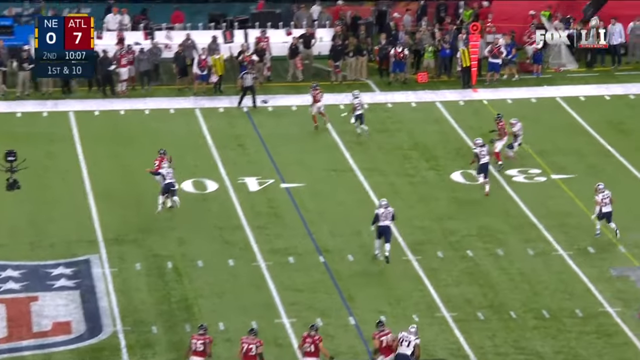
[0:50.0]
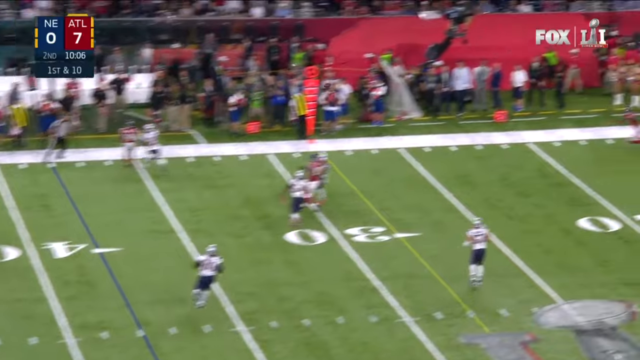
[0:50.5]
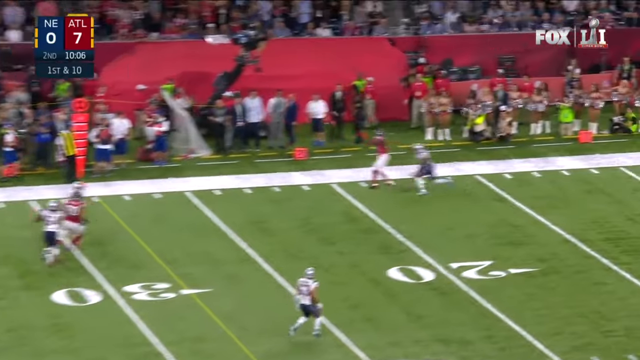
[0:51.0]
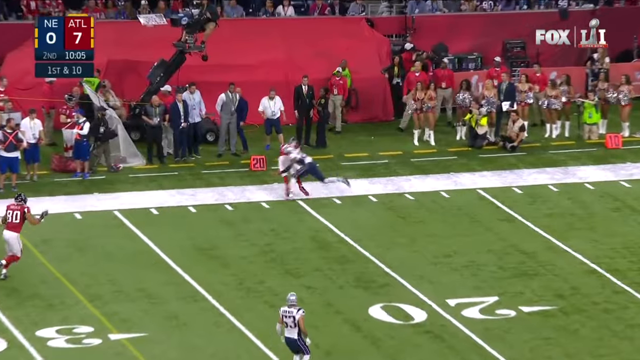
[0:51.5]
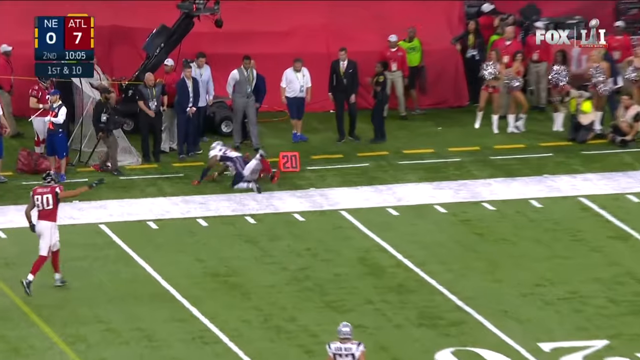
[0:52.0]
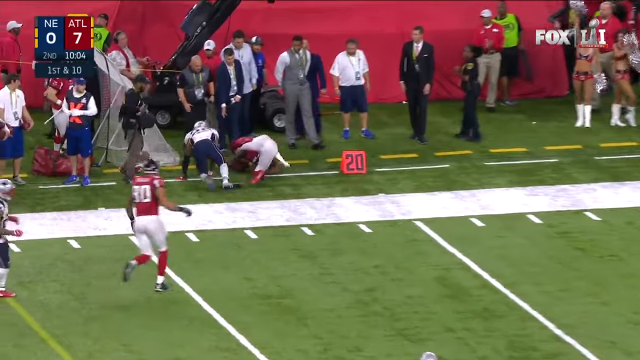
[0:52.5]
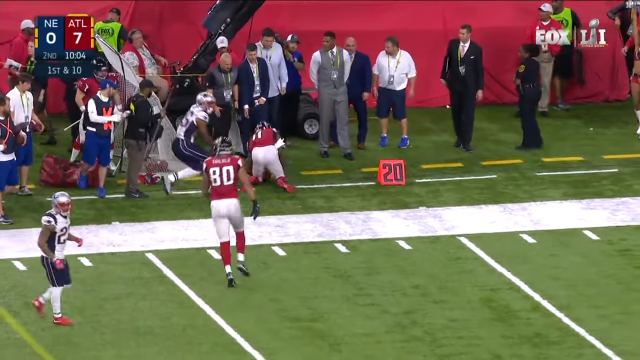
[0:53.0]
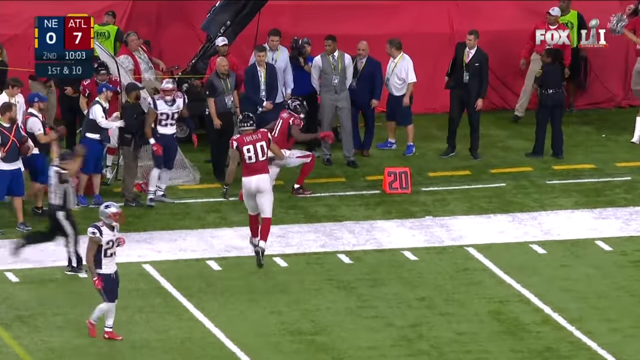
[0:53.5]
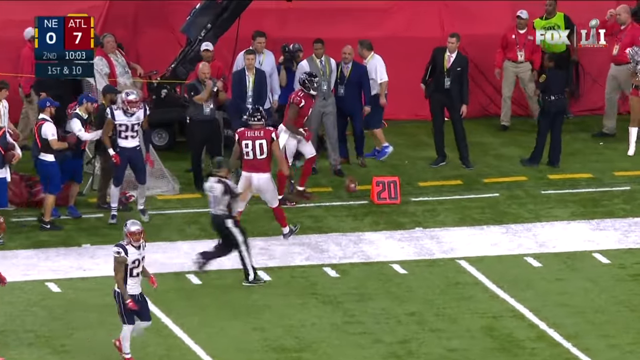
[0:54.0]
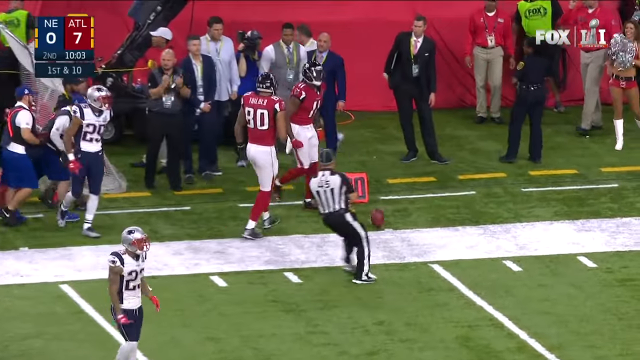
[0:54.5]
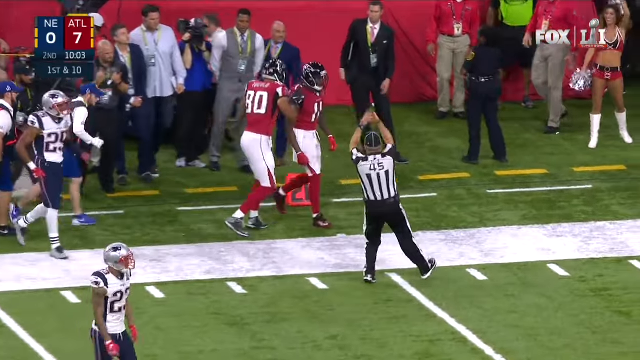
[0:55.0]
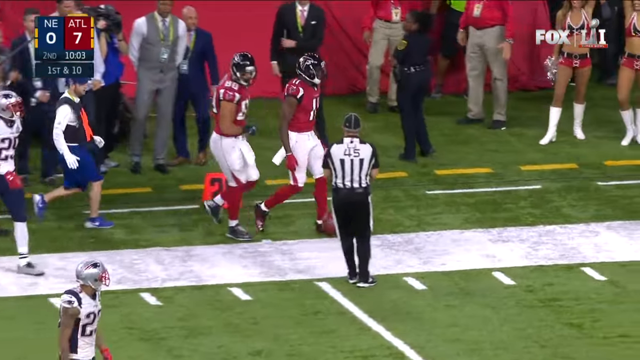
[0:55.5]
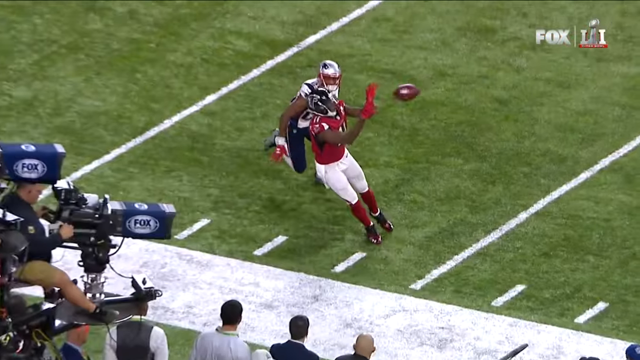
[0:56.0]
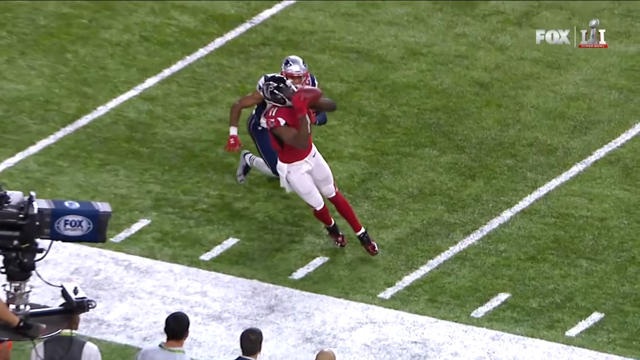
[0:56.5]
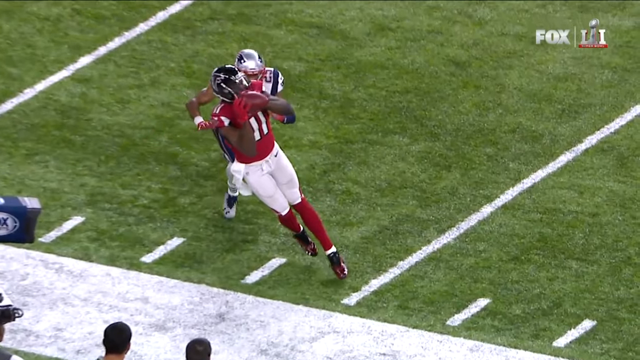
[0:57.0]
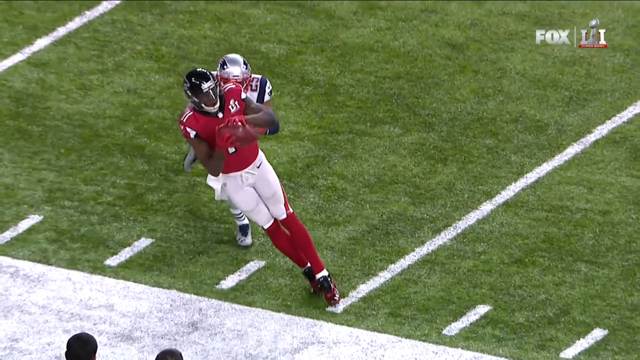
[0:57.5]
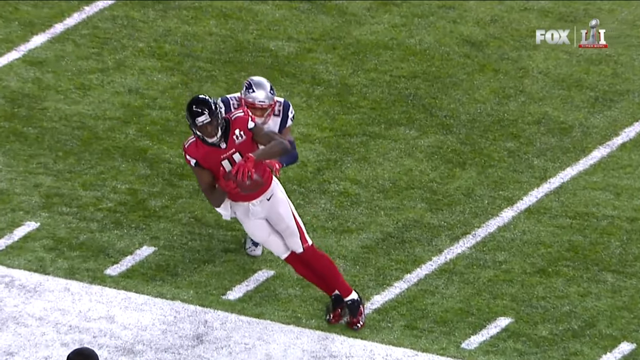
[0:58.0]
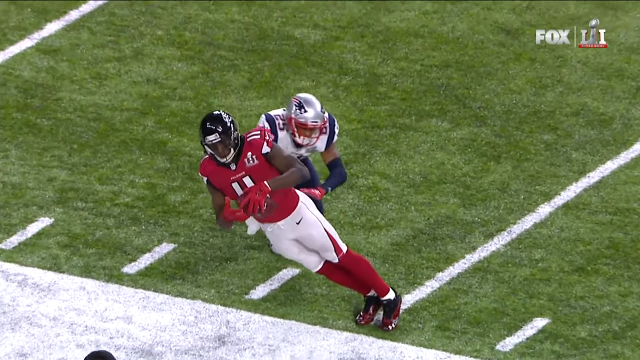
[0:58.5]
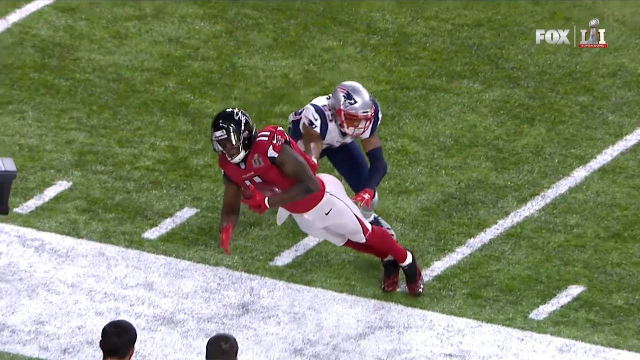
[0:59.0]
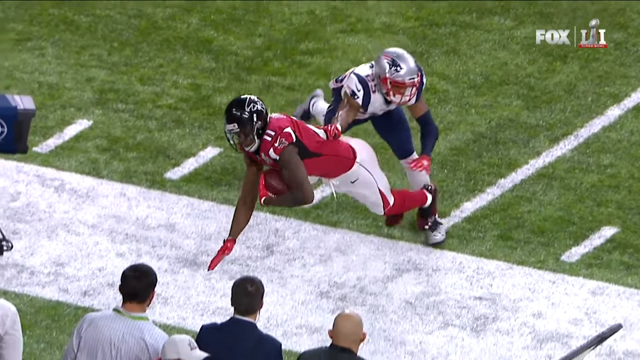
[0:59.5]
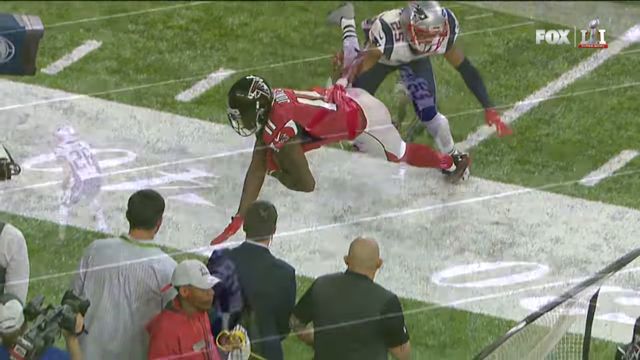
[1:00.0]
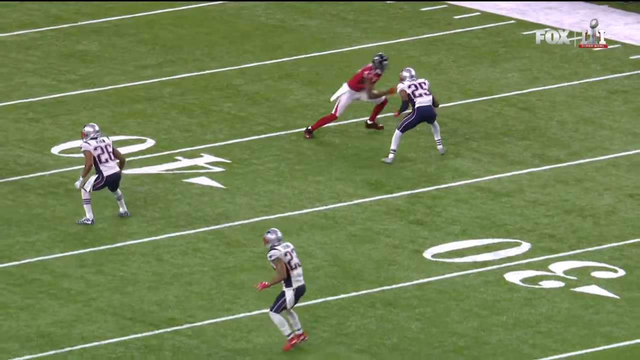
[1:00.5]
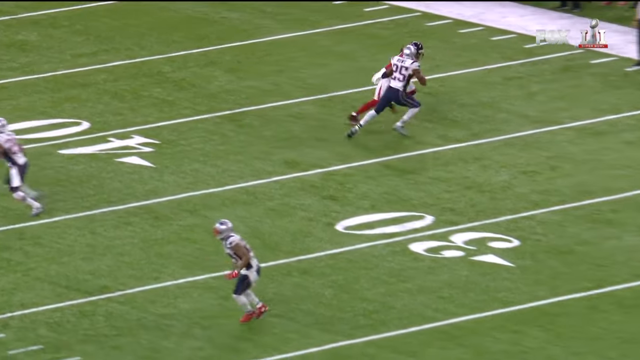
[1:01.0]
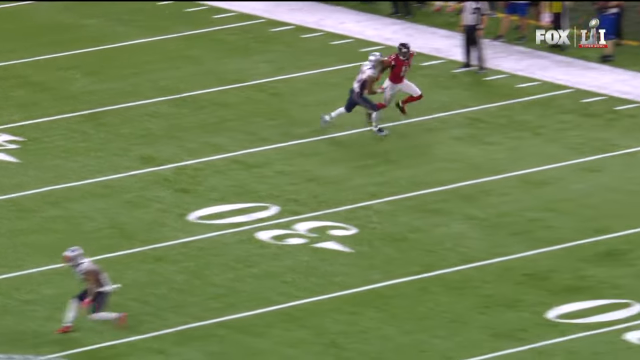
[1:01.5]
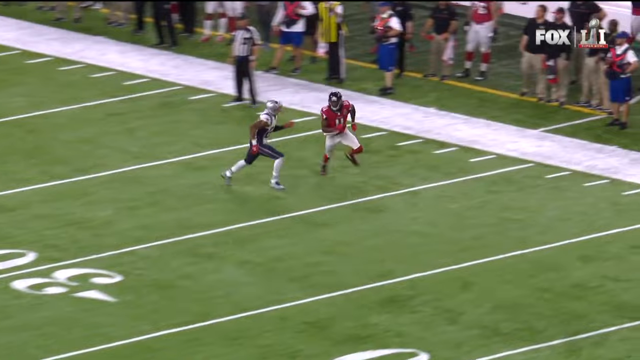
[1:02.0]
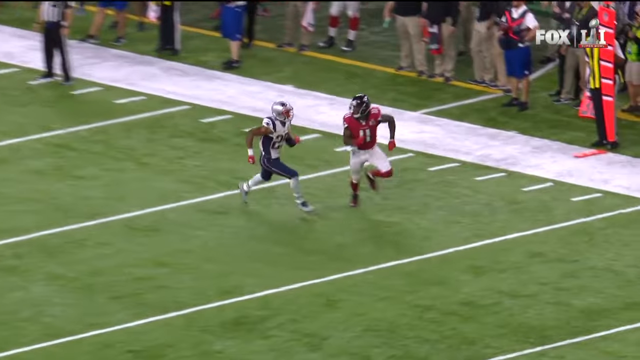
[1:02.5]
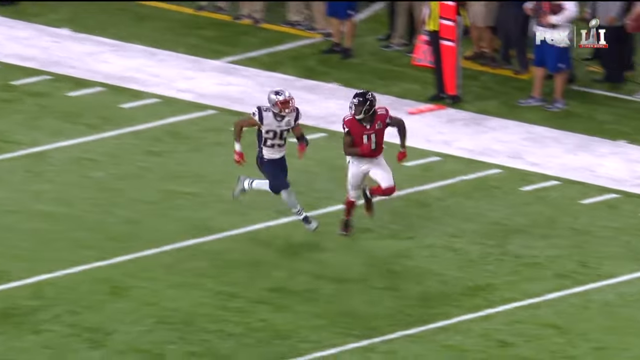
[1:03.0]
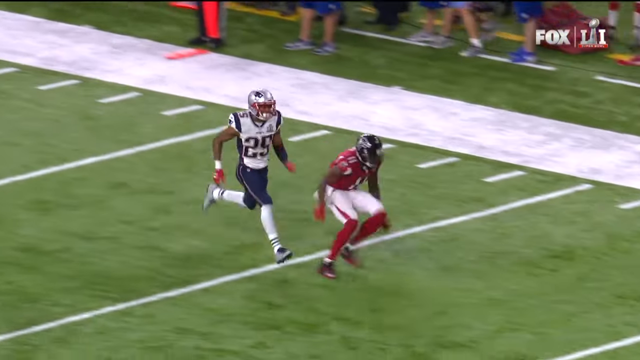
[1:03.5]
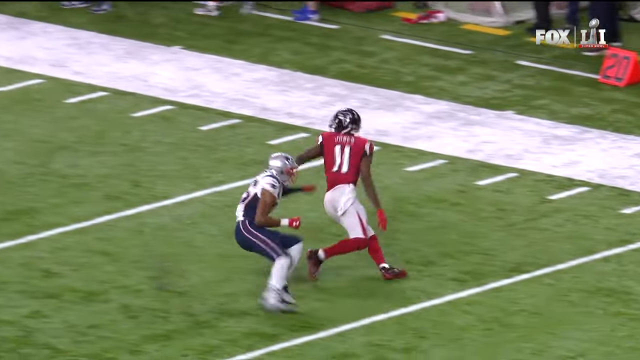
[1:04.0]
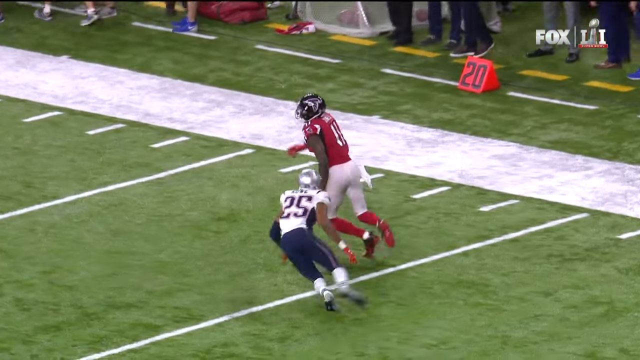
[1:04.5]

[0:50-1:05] A football flies down the field, and number 11 Julio Jones makes a very tough sideline catch around the 20-yard line. He extends his body but keeps both feet before the sideline, and a referee comes in and makes a motion confirming the catch. A zoomed-in replay shows Julio from a front view with both feet down on the turf as he makes the catch right in front of Patriots player number 25, who was trying to cover him. His route has him running downfield, turning left, and traveling back a couple of yards to make the catch.